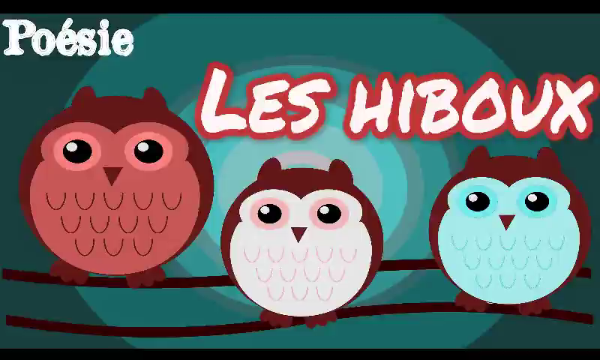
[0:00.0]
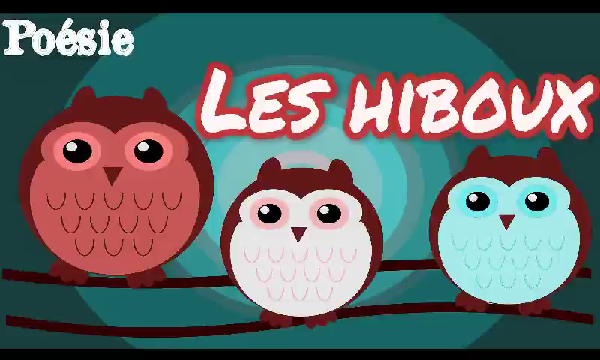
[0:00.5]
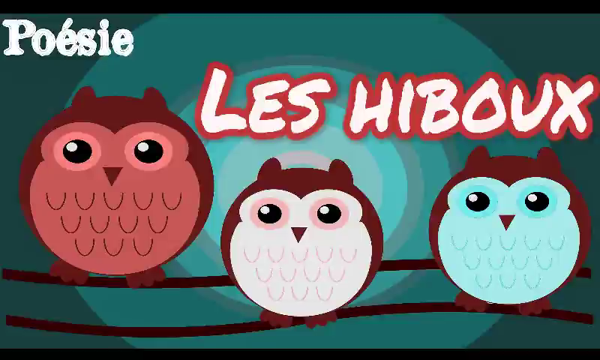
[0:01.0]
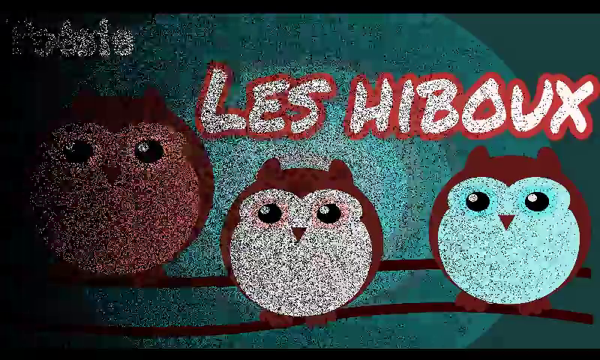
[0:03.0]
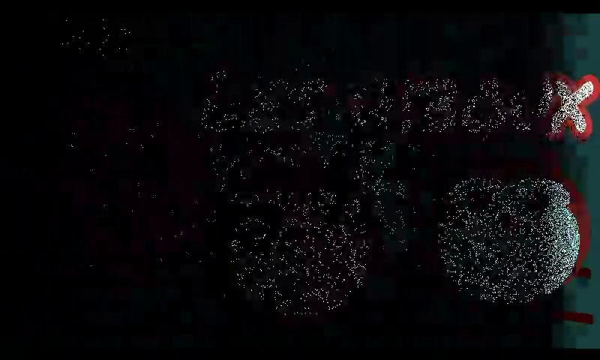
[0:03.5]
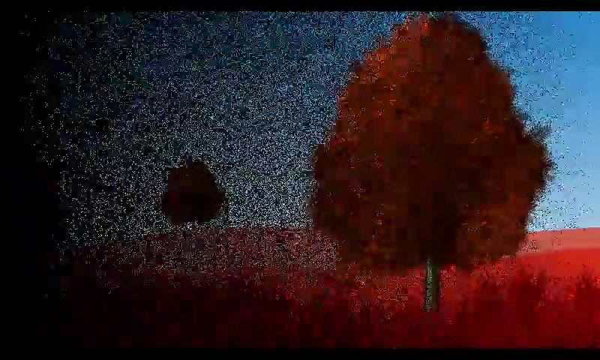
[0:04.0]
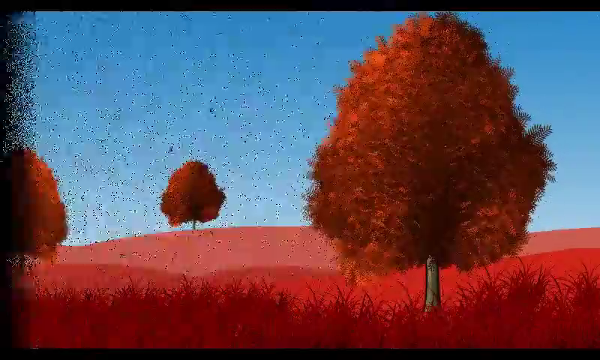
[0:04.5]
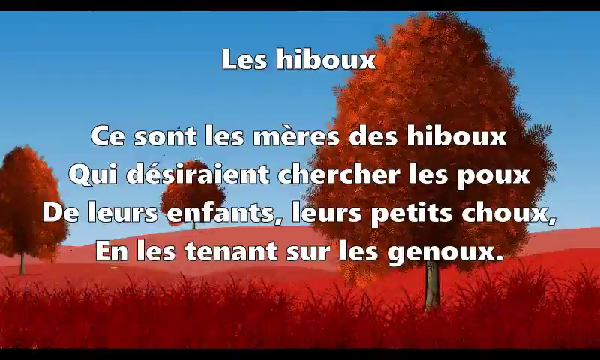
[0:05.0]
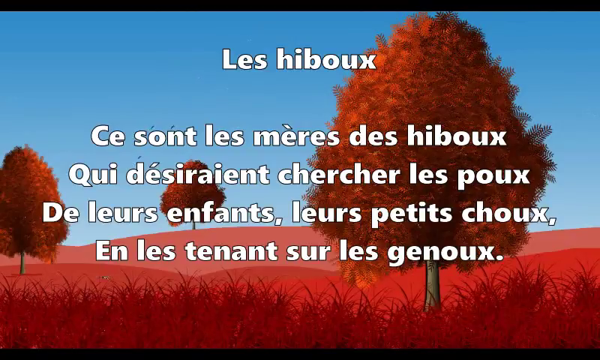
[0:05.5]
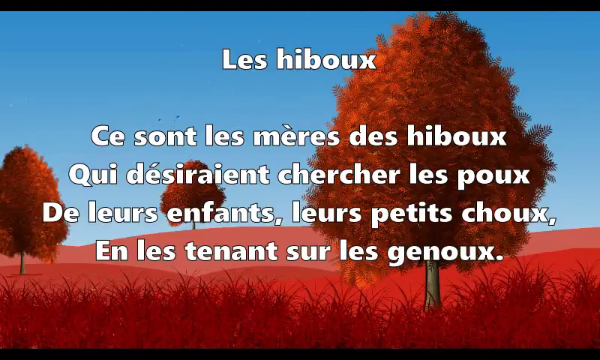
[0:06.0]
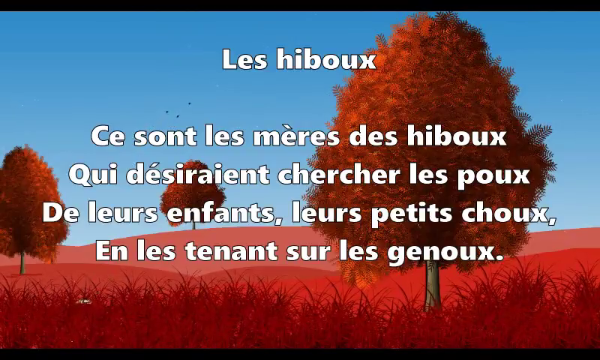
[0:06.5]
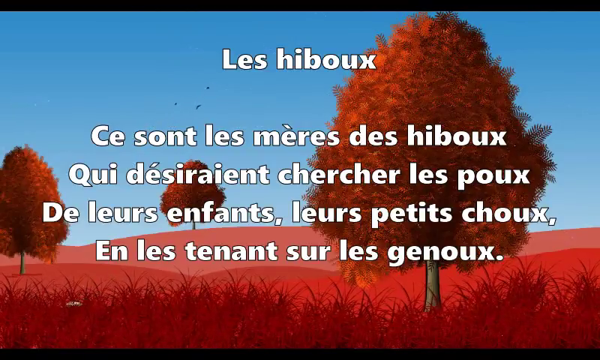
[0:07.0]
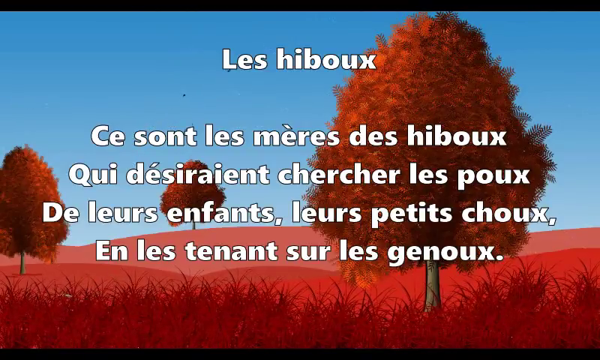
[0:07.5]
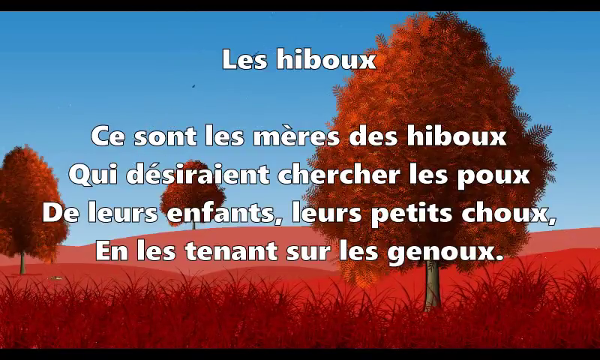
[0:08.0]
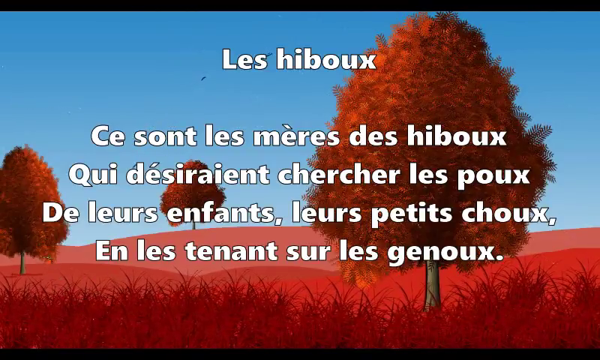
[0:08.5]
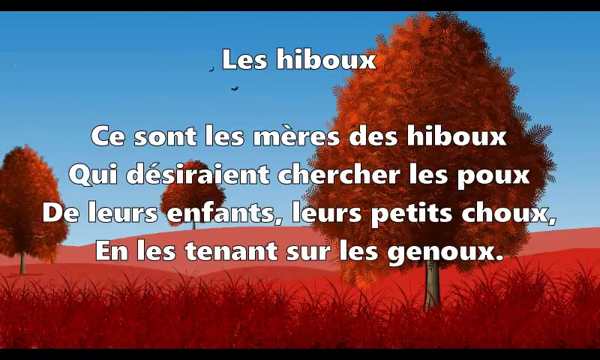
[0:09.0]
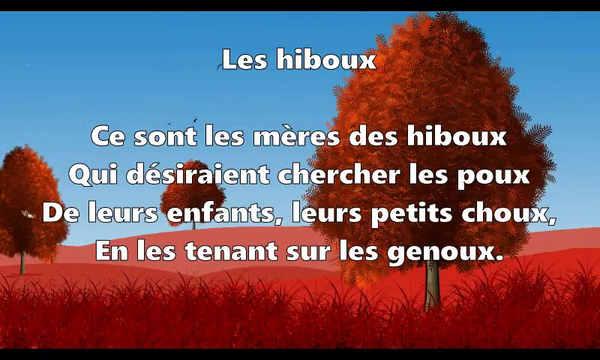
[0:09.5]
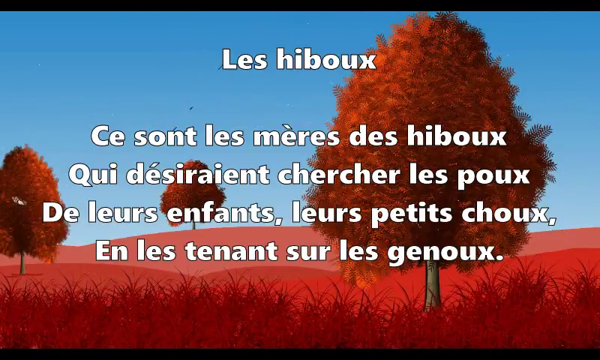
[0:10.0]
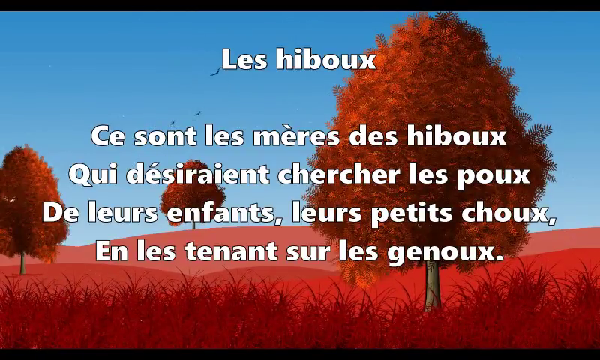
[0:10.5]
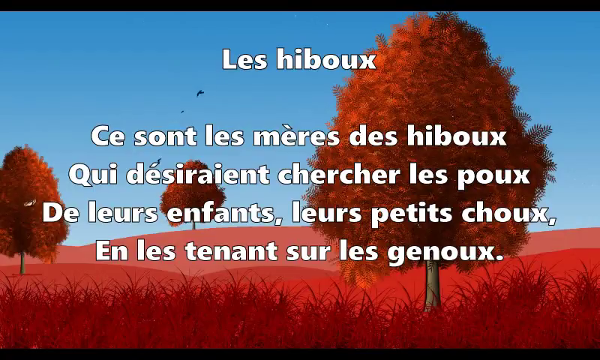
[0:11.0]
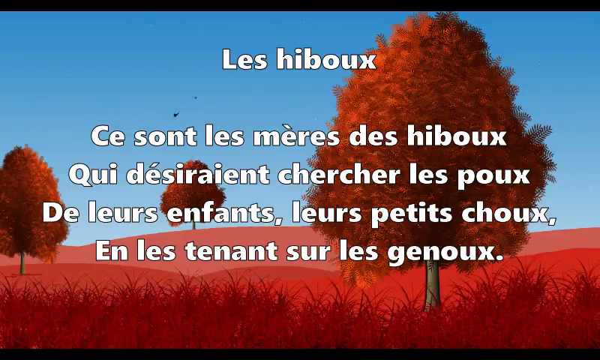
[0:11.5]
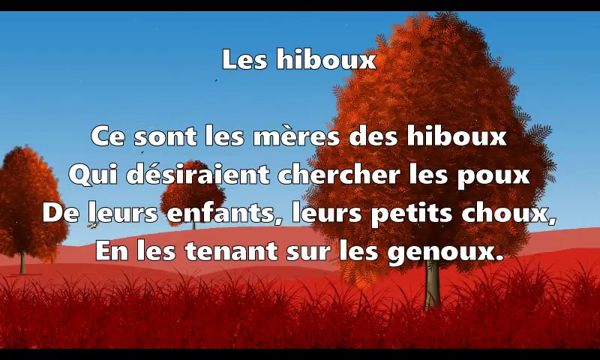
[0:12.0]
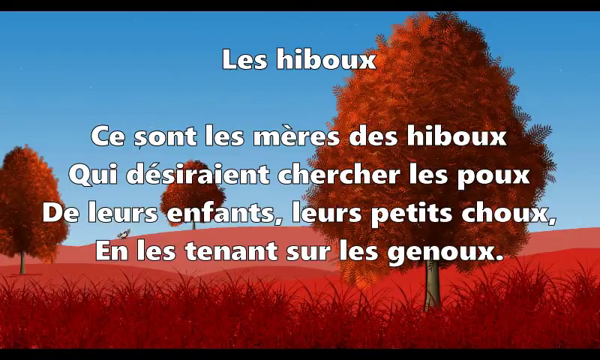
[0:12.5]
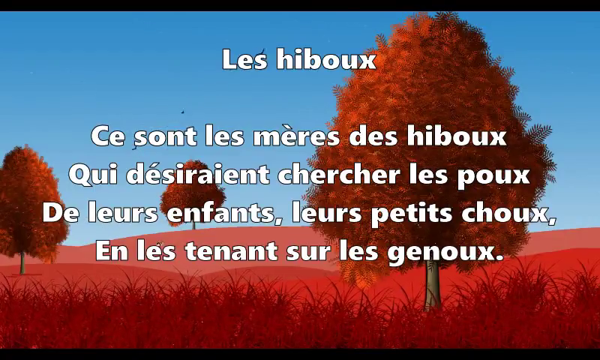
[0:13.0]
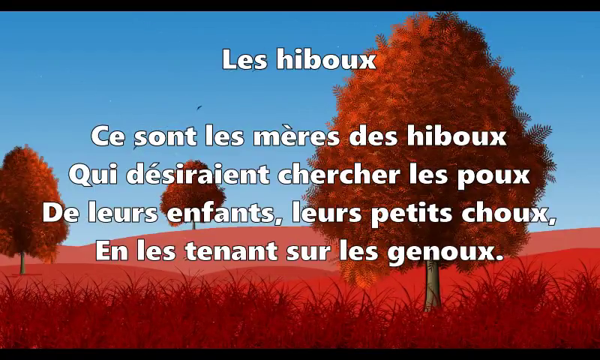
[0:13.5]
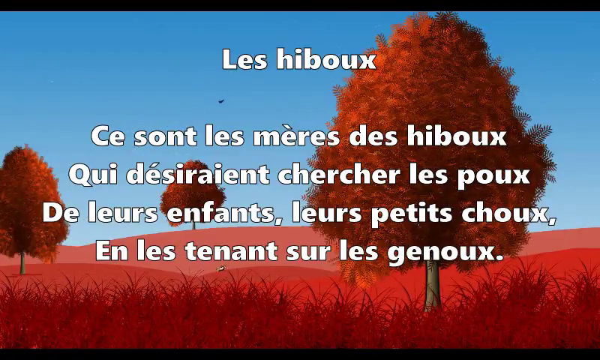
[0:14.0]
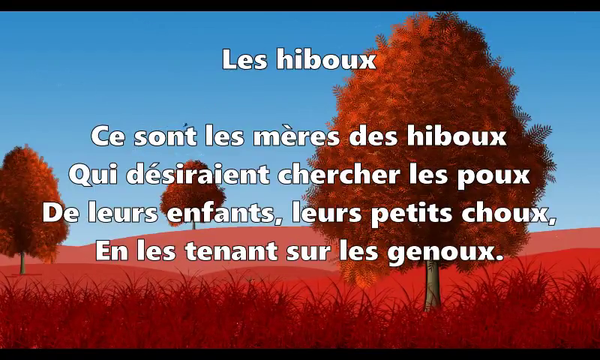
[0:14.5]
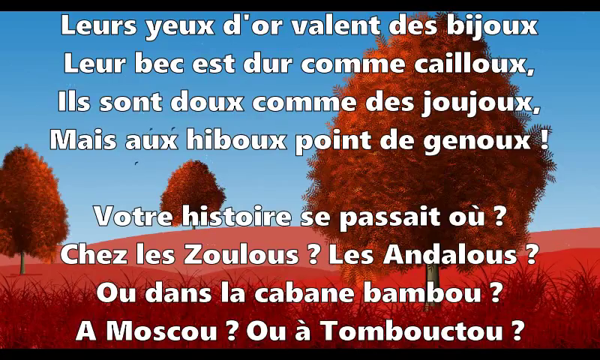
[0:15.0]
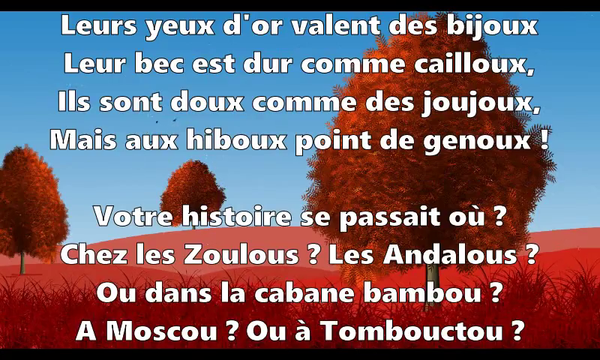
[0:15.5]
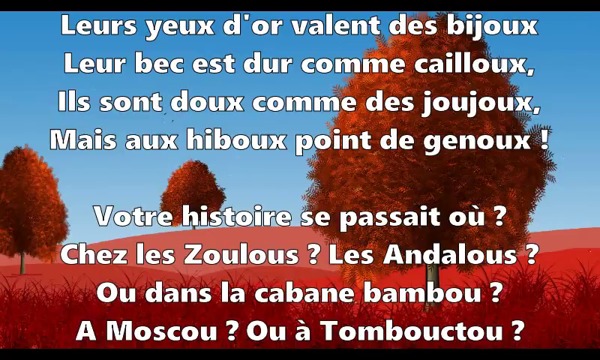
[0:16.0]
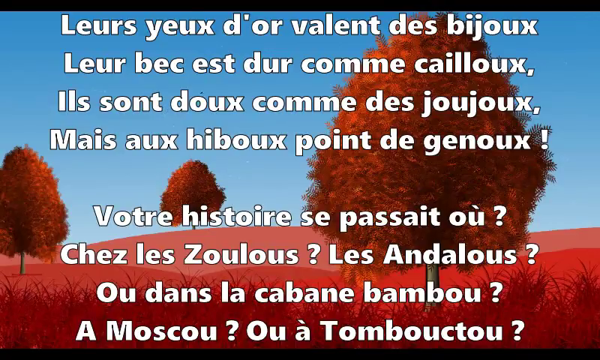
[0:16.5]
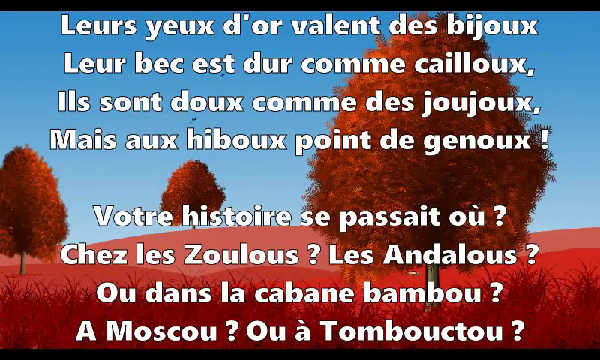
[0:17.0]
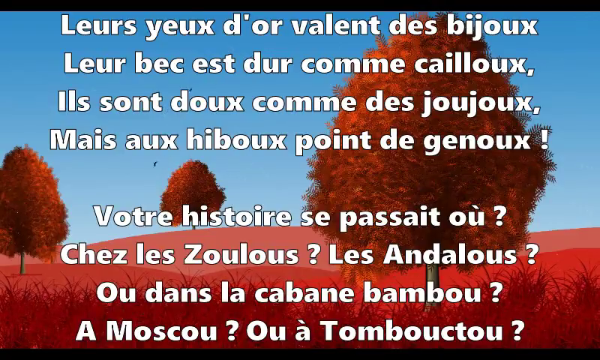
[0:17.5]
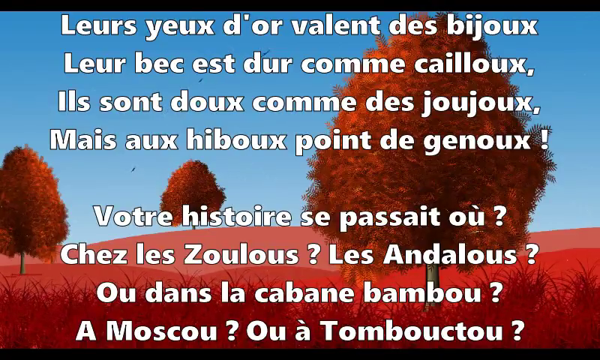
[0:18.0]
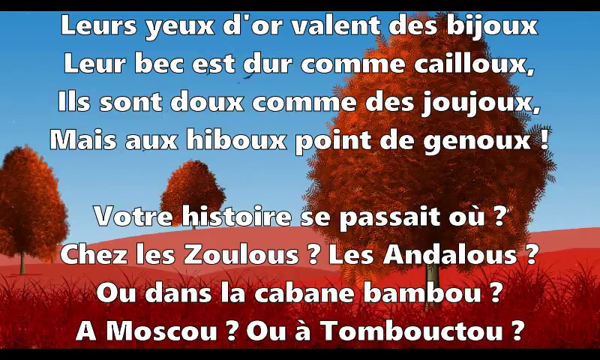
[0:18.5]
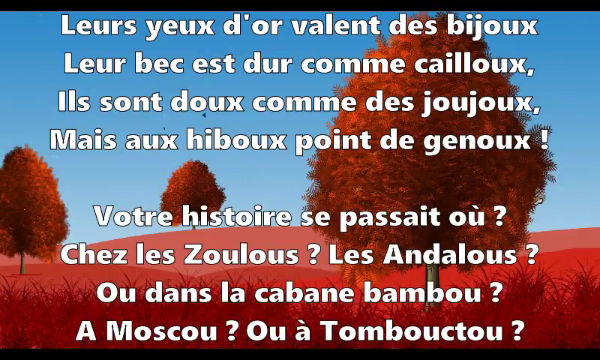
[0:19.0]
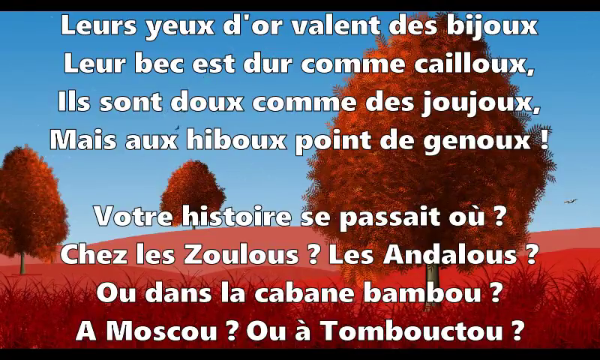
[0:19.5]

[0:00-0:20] Short segments with various backgrounds appear. At the top of the screen is text, apparently in French, in white lettering surrounded by a red outline. Below it is an image of three cartoon owls on a branch. The owls are round, sphere-shaped, giving them a cute cartoony look, and each has a different colour to the tufted feathers on its chest: one brownish, one white and one blue. Next comes imagery of trees with red grass underneath, and white French text with a black outline pops up over it in paragraphs of information. The backdrop has a blue sky, orange trees and red grass, and the white text stands out against it.